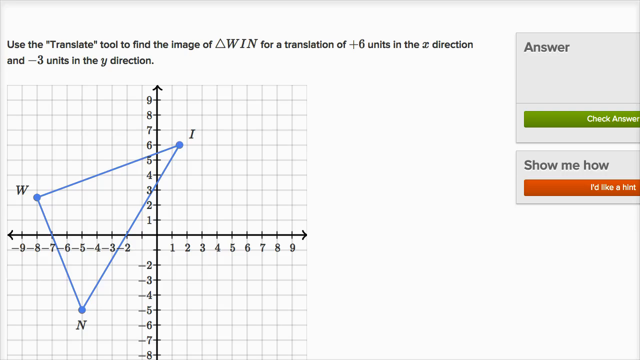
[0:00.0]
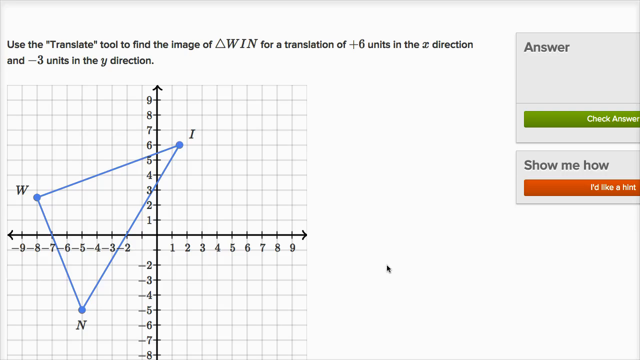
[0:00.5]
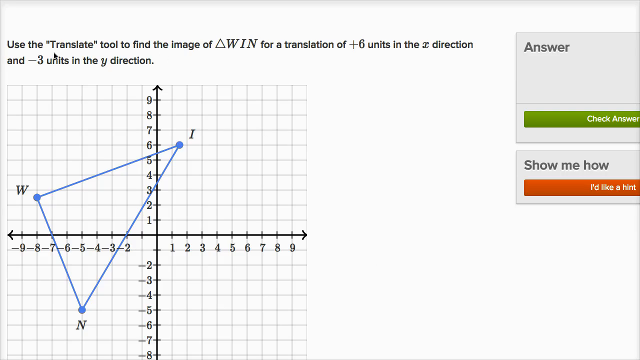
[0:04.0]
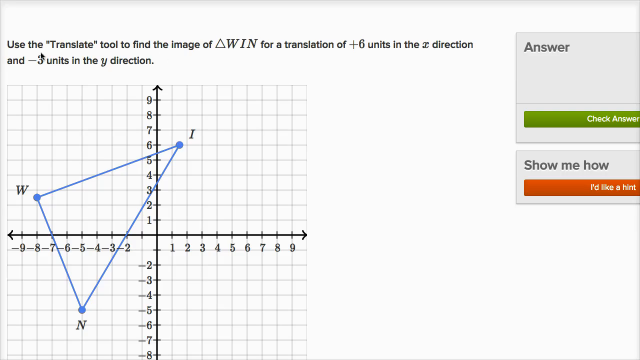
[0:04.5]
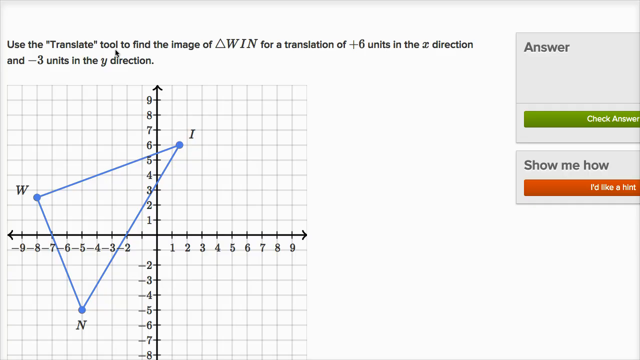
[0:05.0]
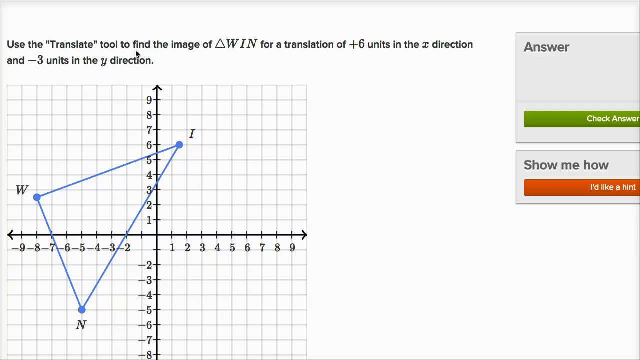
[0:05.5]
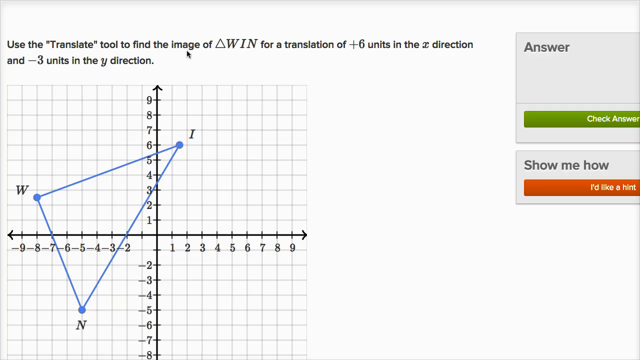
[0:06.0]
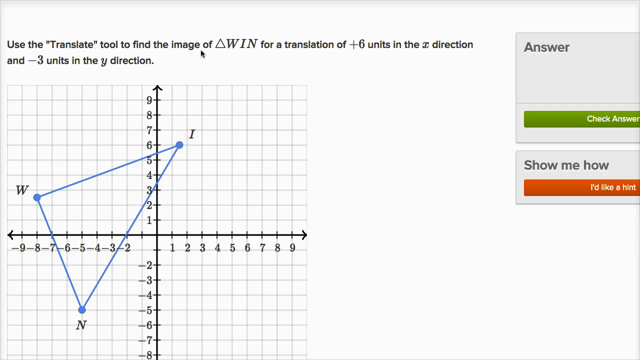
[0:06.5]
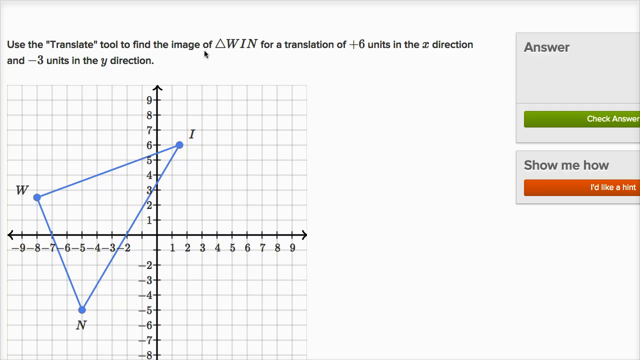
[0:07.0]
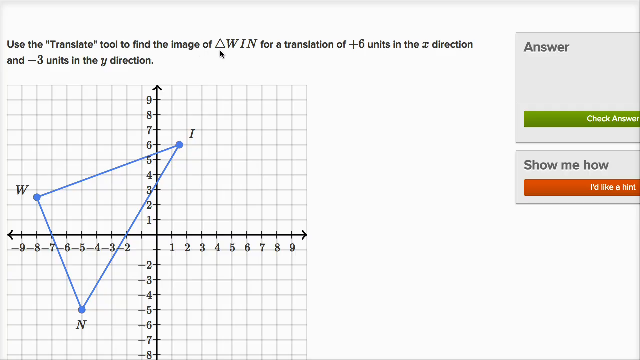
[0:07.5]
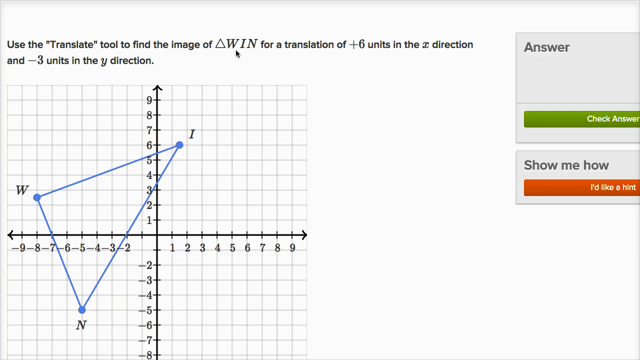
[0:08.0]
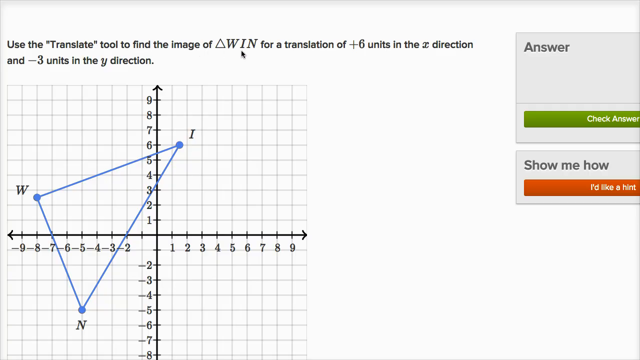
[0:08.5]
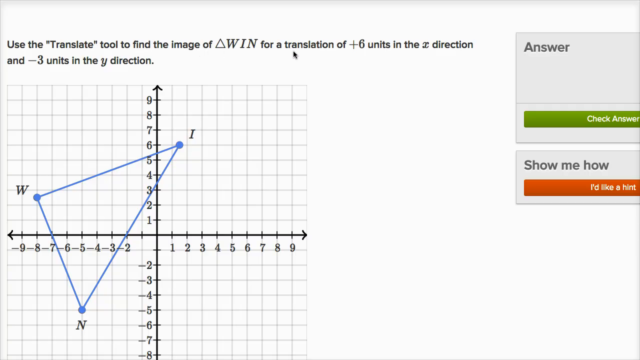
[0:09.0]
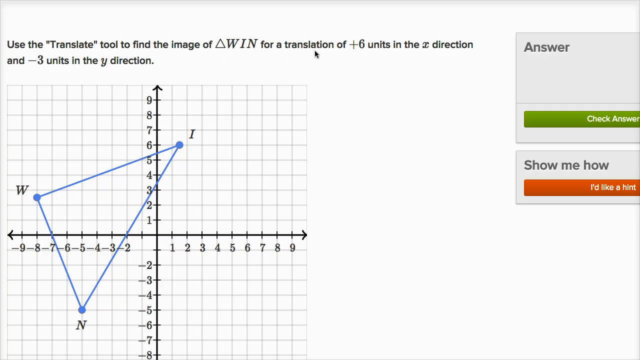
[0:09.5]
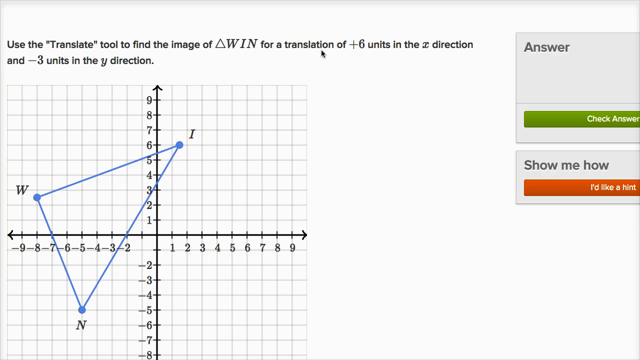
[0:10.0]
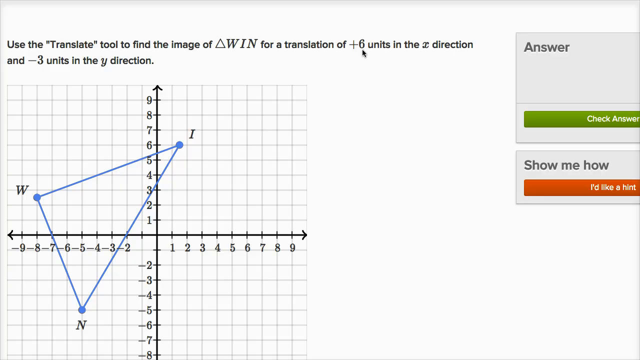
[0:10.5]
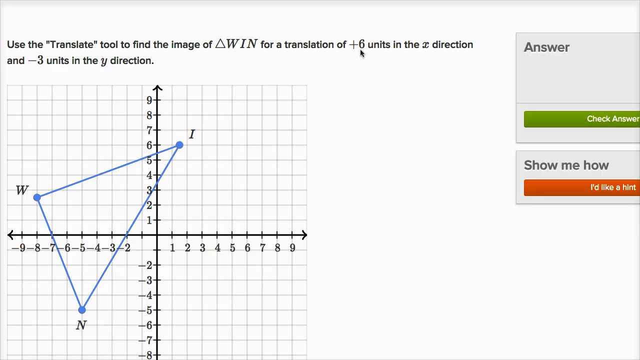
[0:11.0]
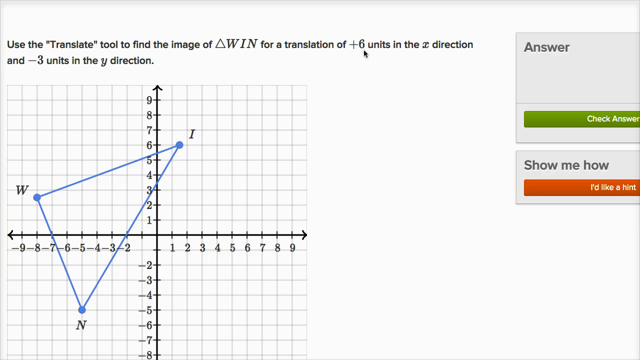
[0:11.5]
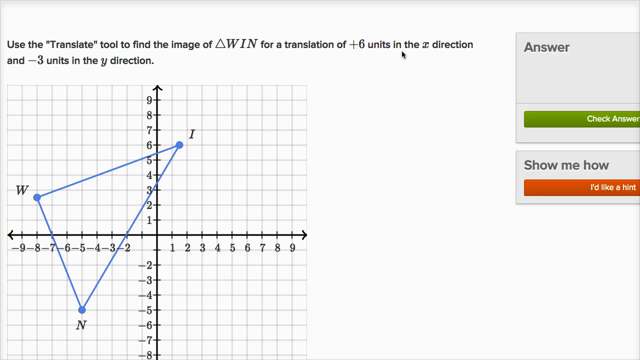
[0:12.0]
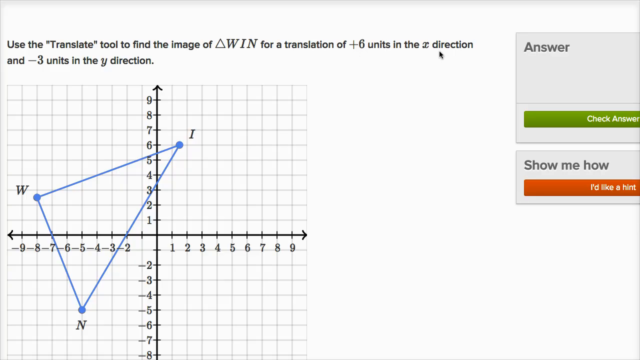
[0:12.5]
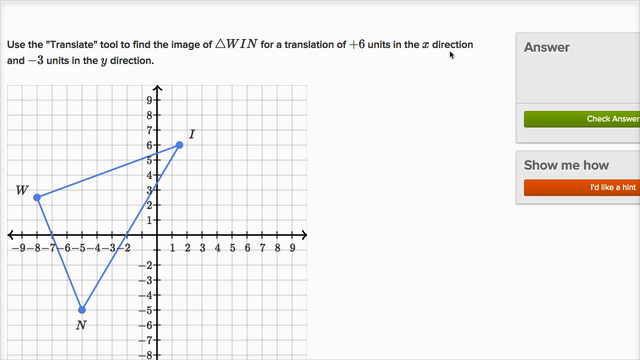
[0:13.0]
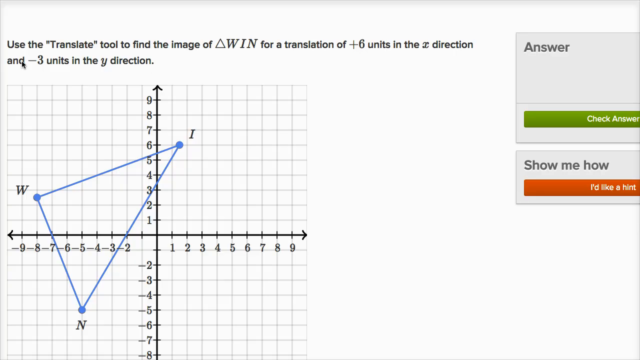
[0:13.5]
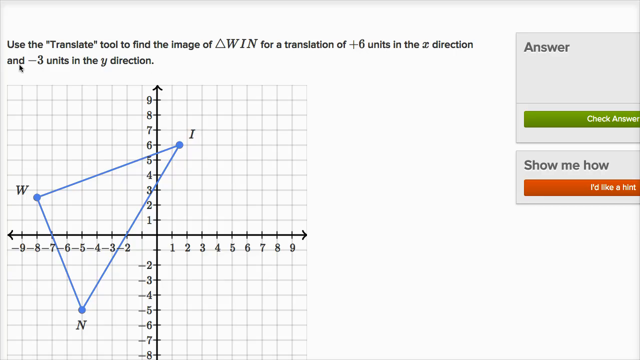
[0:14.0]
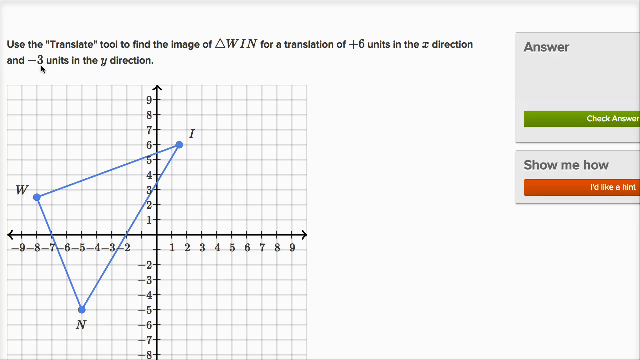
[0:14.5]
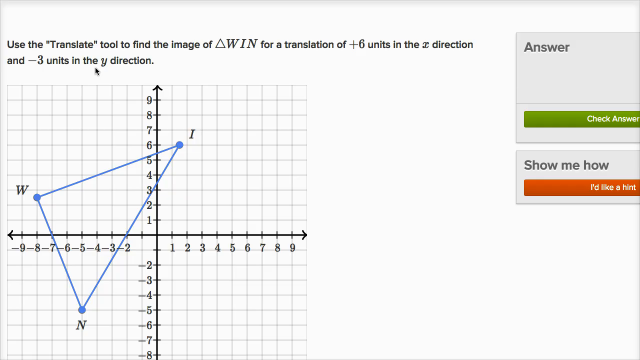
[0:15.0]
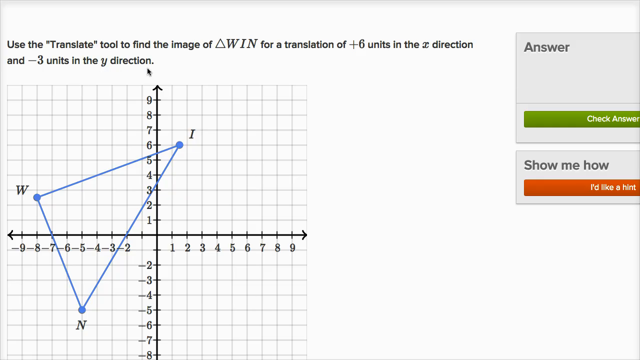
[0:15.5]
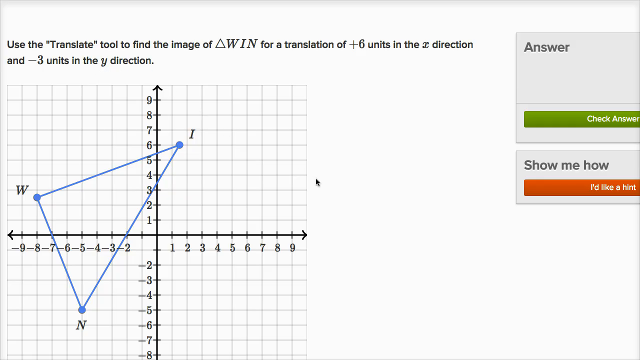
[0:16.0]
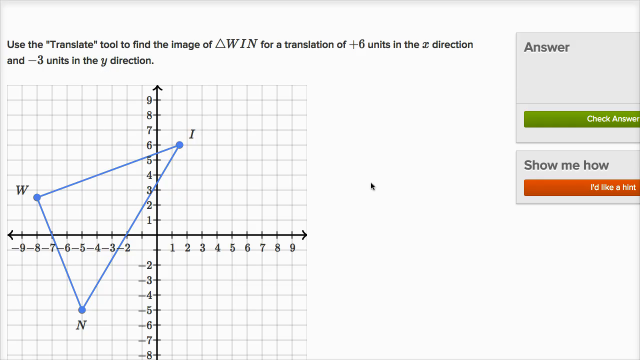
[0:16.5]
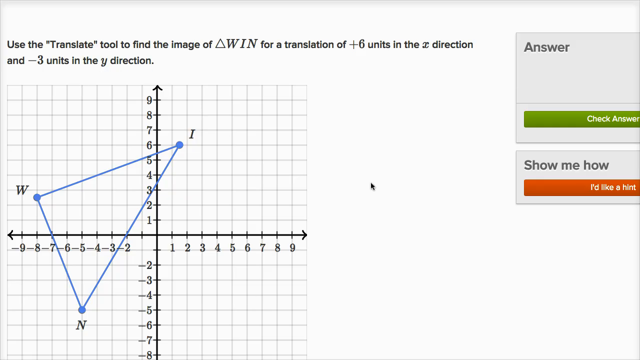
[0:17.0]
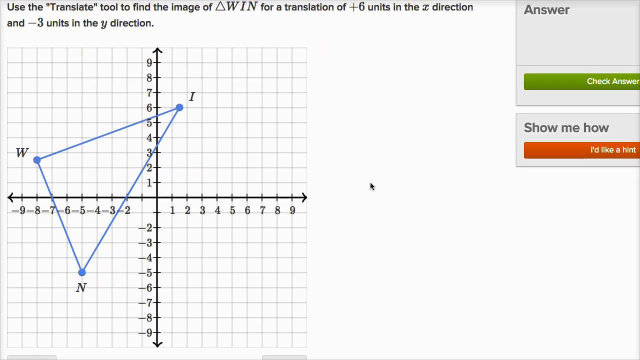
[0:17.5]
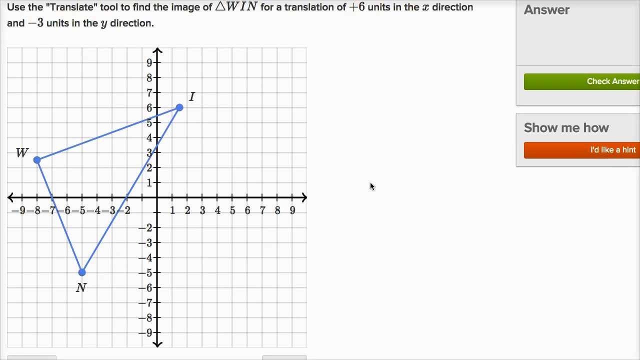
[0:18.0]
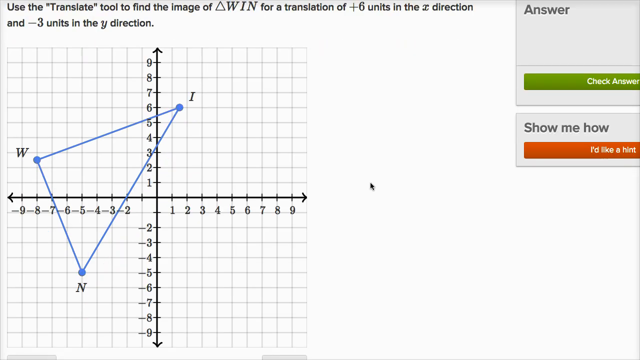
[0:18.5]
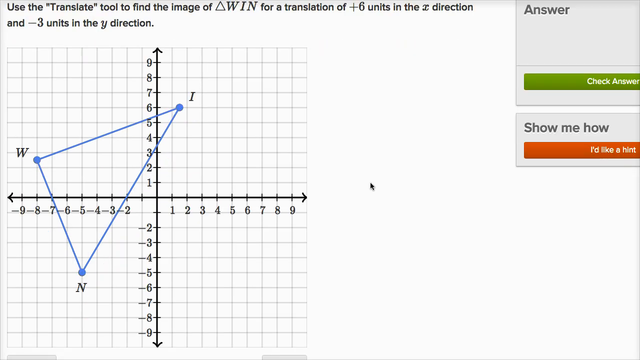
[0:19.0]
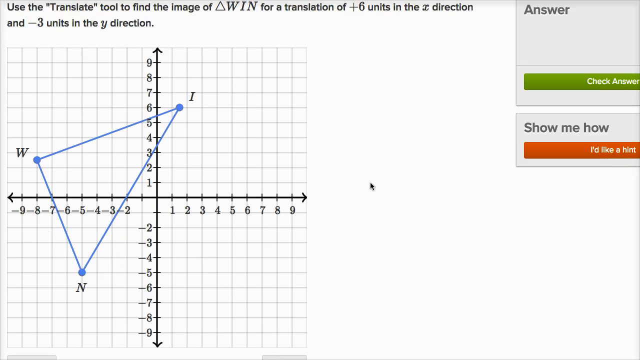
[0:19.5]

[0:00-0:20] A zoomed-in screenshot of a math screen shows text reading: 'use the "translate" tool to find the image of delta WIN for a translation of plus 6 units in the x direction and negative 3 units in the y direction'. Below it is a graph whose x and y axes each run from negative 9 to 9. There are three points: W at (-8, 3), I at (1.5, 6), and N at (-5, -5). A blue line connects the dots, forming the WIN from the question. On the right side are an "answer" section and a "show me how" section. Under "show me how" is an orange button that says "I'd like a hint", and the answer area has a green box that says "check answer", so it looks like hints and answer checking are available. The mouse runs across the question itself, then the page scrolls down a little.